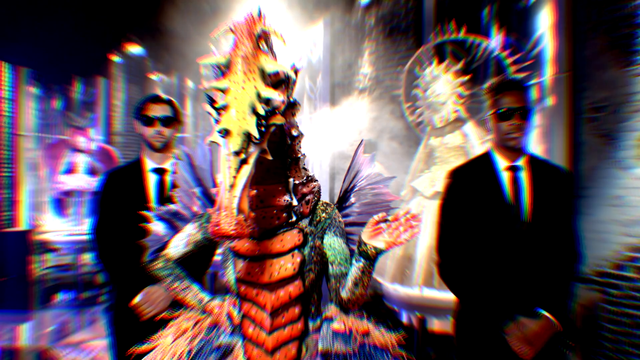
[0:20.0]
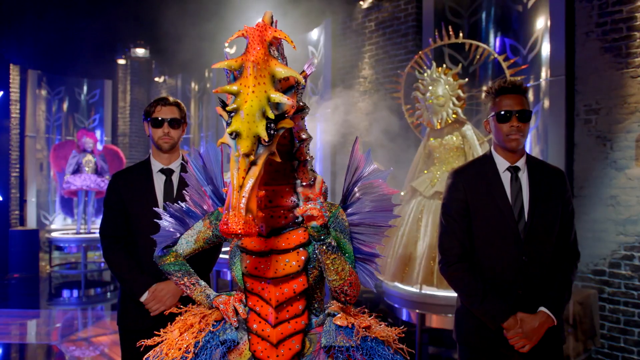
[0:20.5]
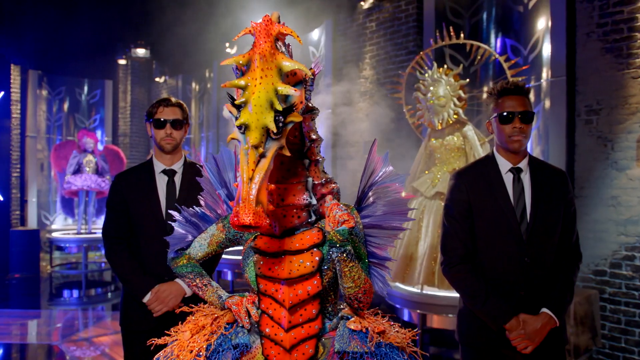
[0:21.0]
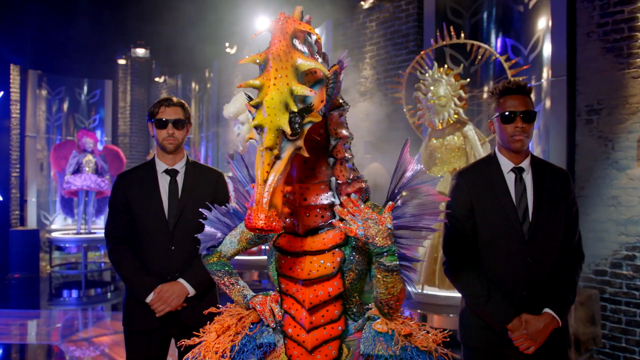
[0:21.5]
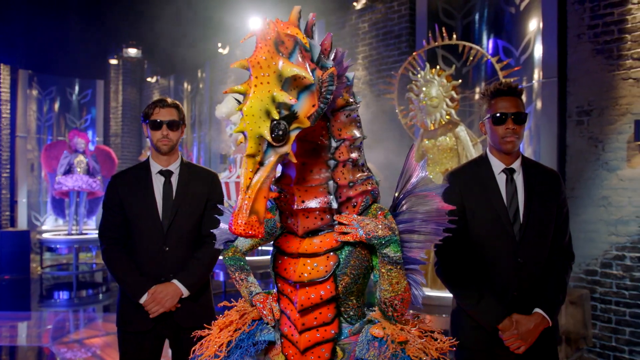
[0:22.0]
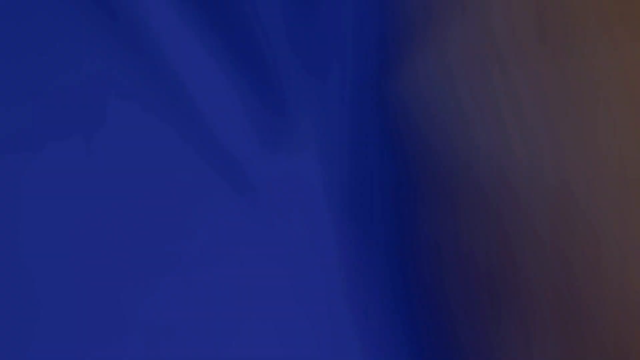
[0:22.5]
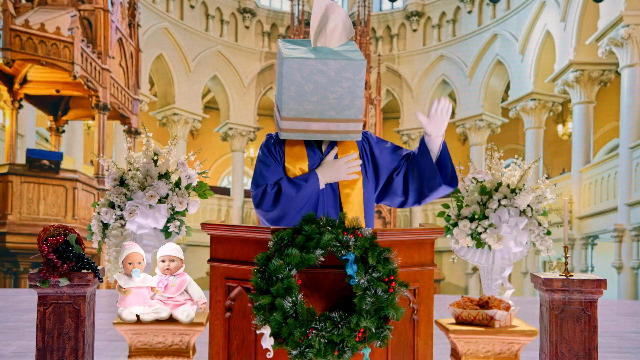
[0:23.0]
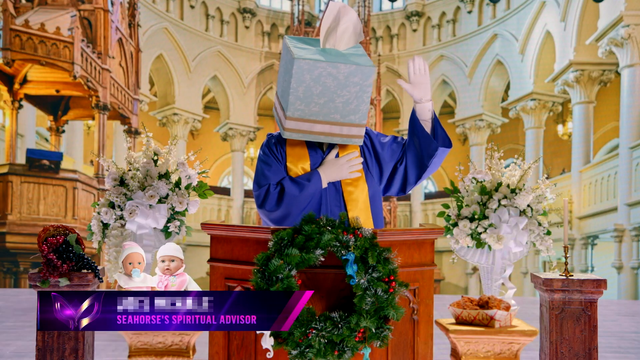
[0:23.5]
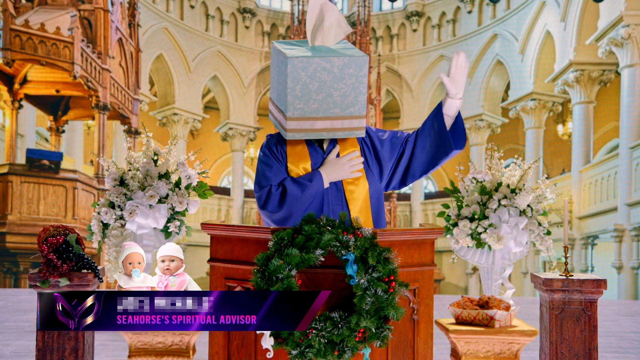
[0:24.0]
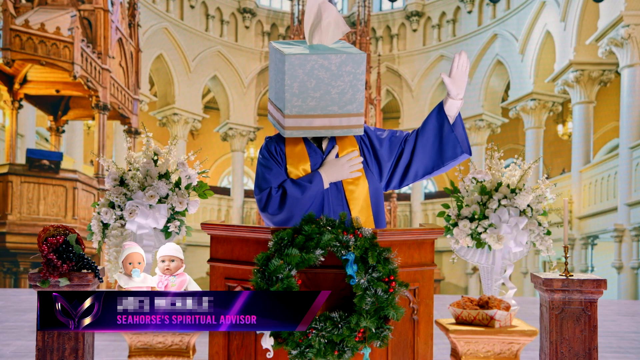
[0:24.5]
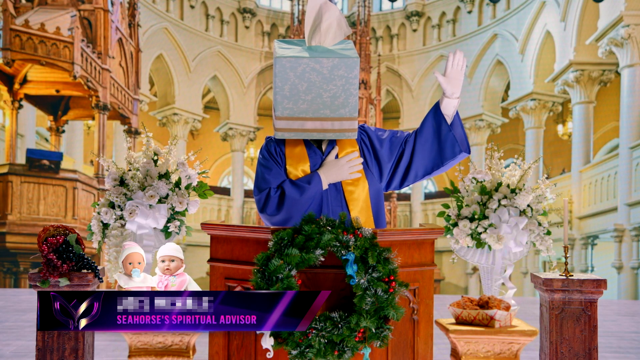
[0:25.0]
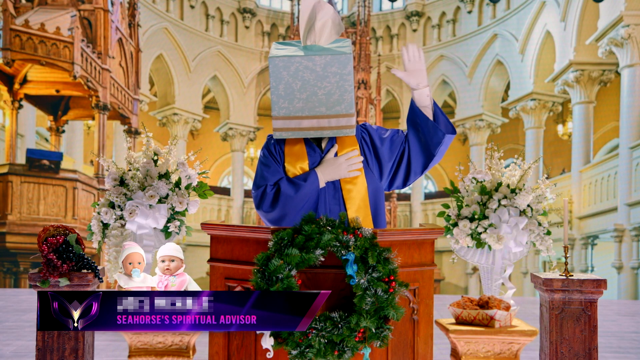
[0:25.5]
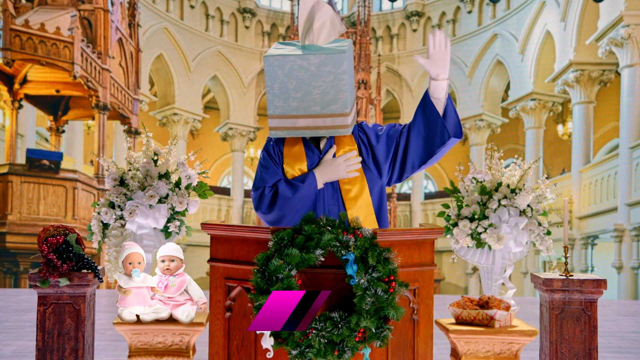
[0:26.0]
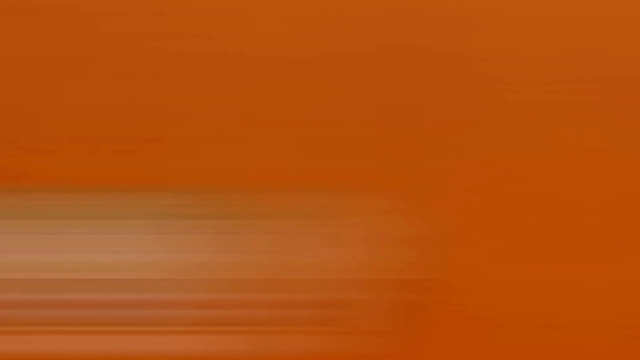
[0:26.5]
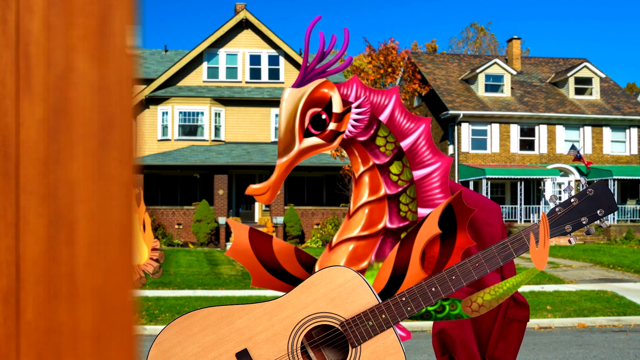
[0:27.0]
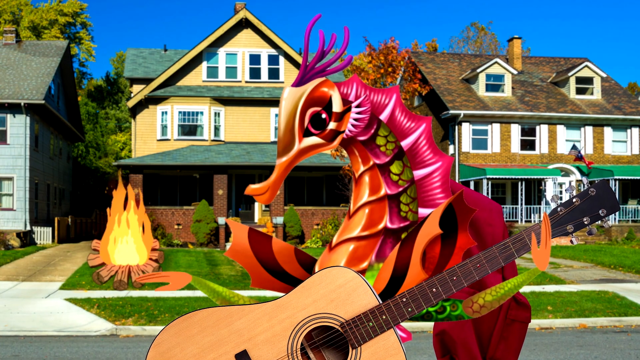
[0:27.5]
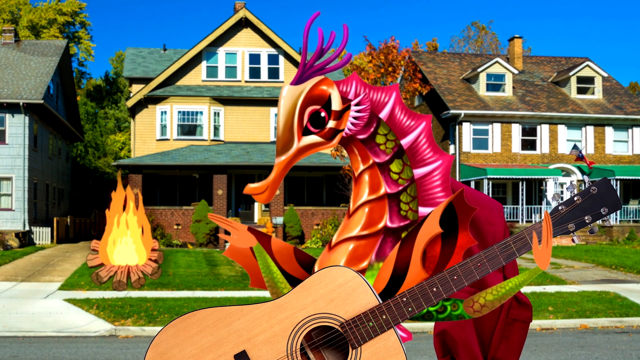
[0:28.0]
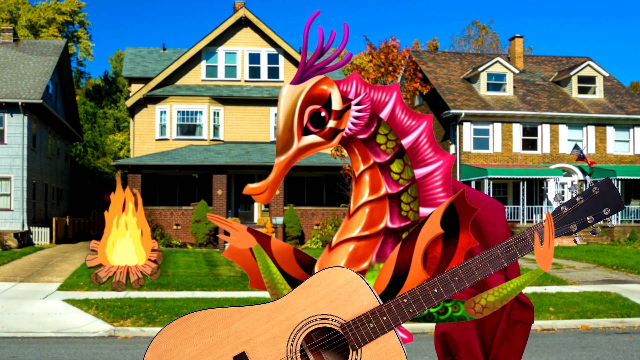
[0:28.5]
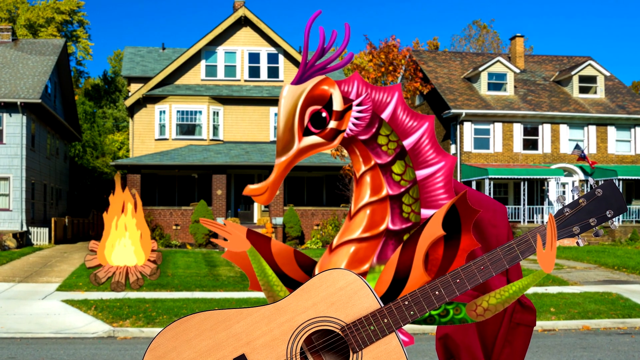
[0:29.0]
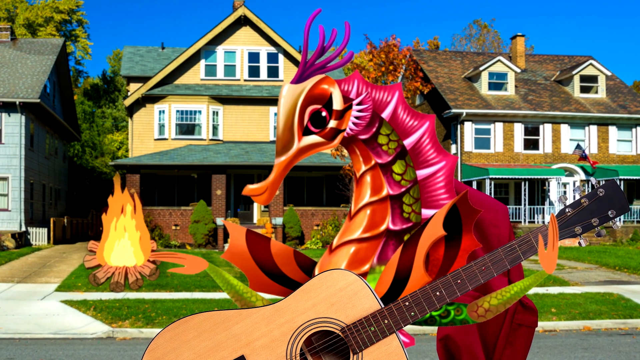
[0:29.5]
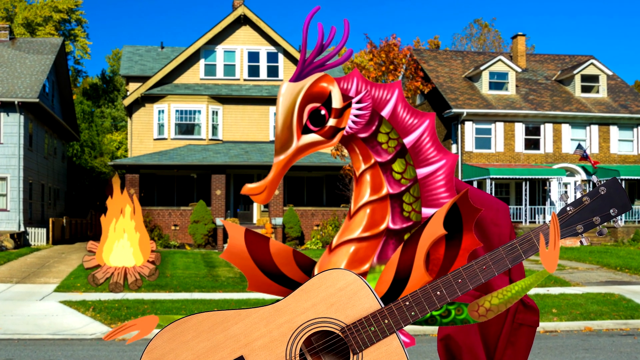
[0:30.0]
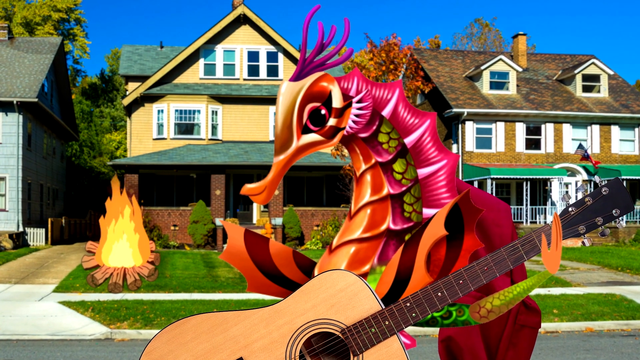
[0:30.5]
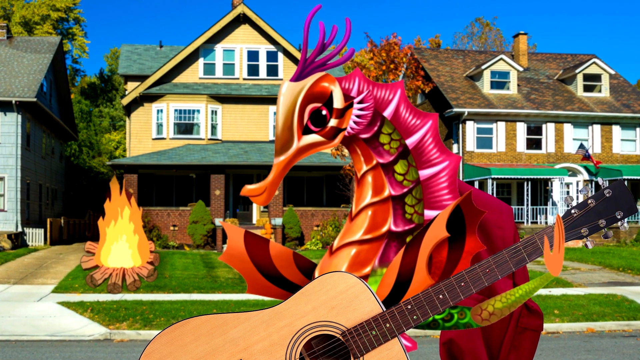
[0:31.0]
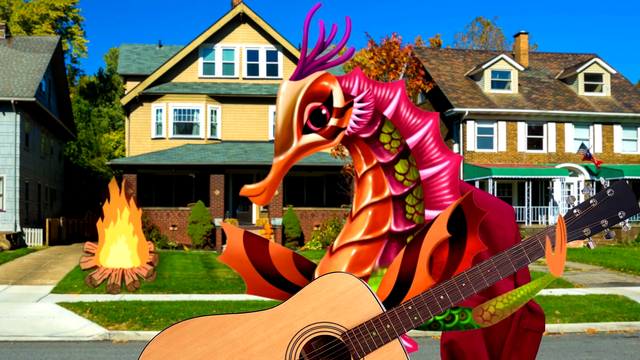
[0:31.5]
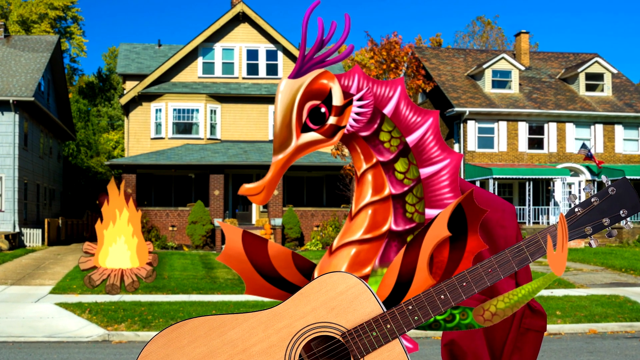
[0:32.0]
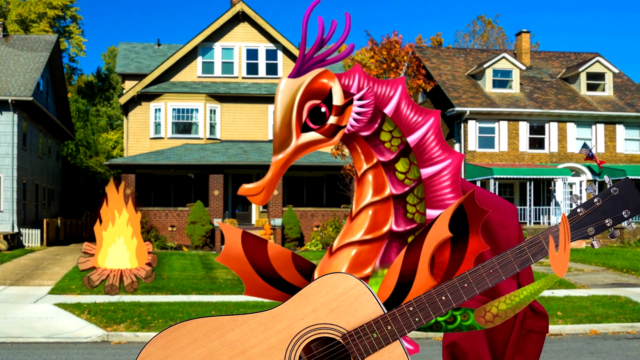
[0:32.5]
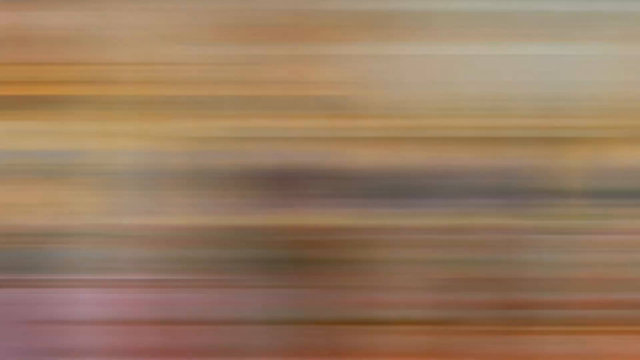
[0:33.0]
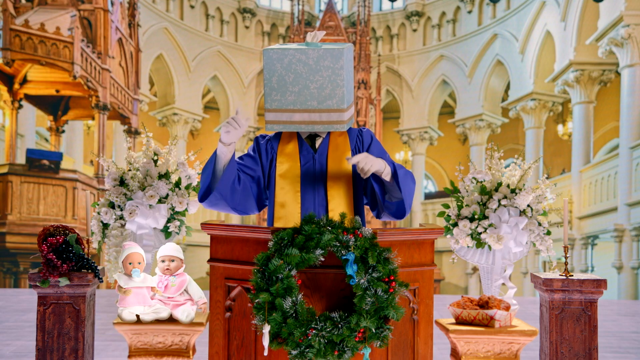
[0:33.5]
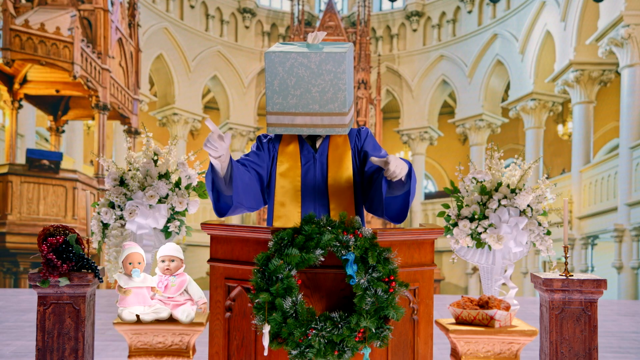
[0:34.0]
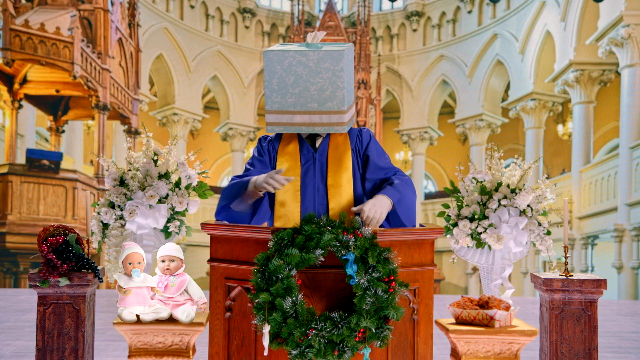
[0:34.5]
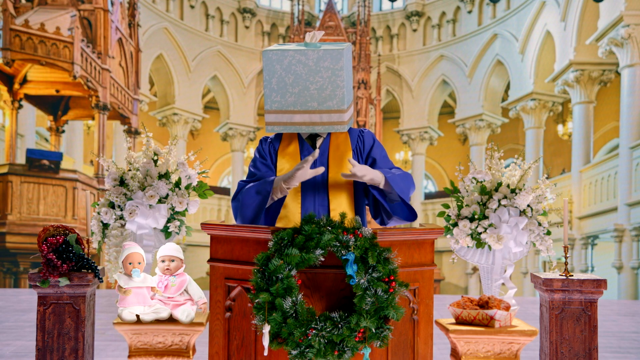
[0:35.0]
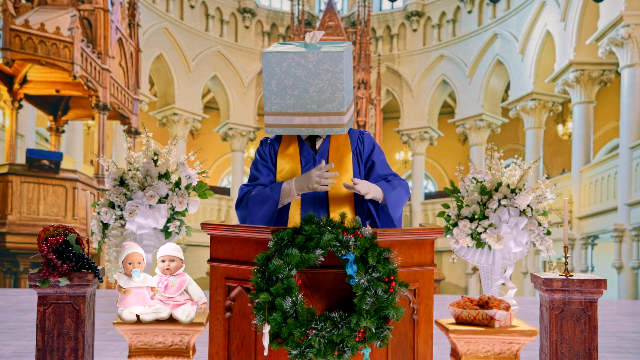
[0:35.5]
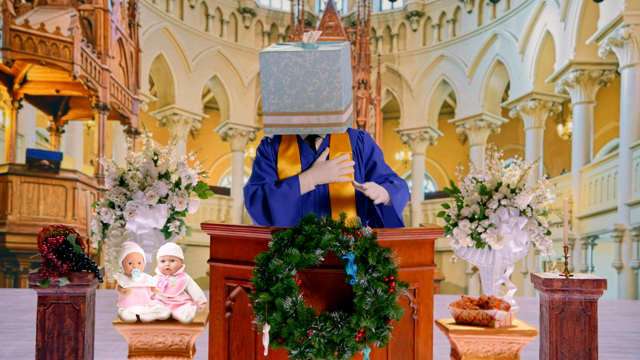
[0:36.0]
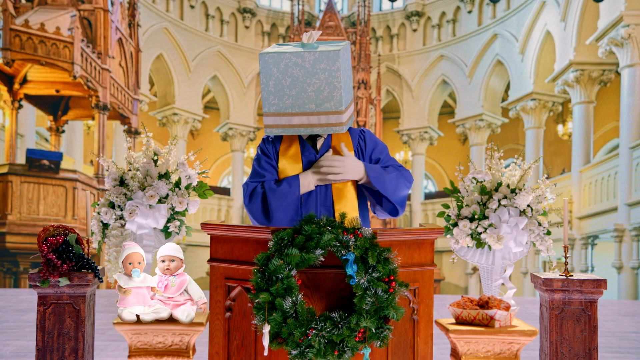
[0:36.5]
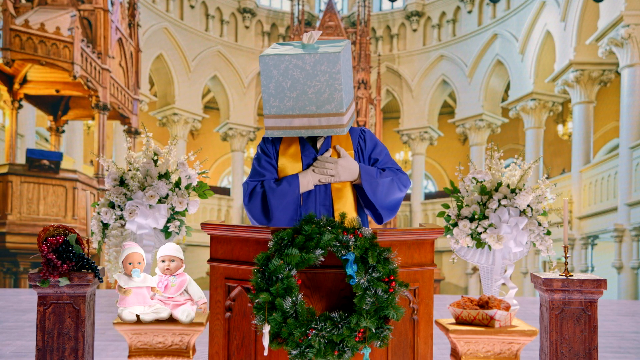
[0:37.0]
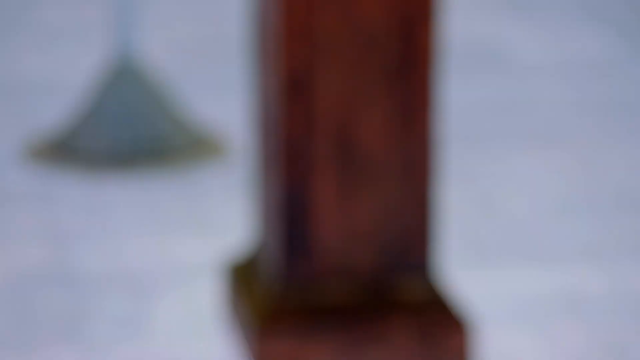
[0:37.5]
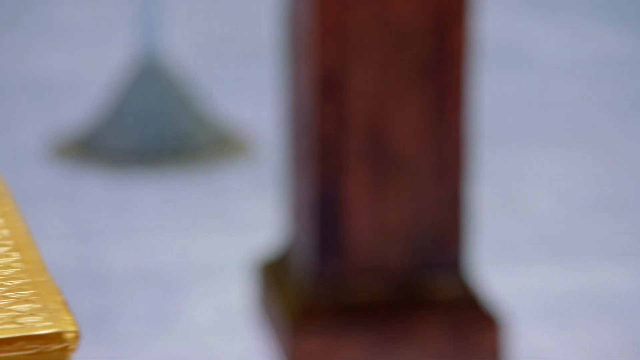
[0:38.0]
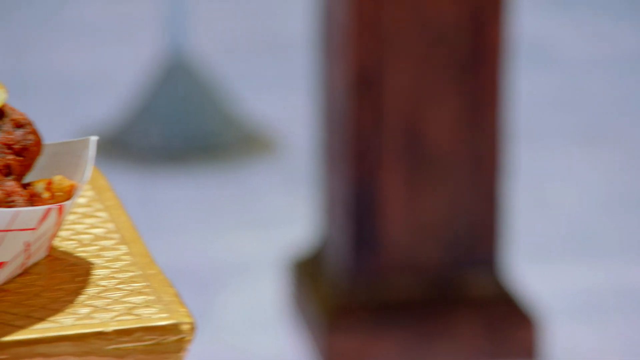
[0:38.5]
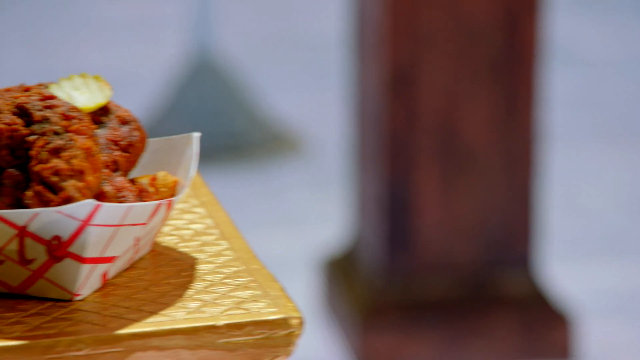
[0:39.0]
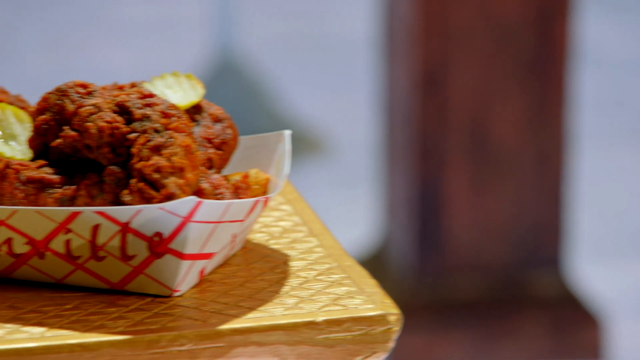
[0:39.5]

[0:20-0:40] Two men wear black suits and dark shades; it looks like one is a white man with a black beard and the other a black man with no beard. Behind them there appear to be different costumes, including a portrayal of a city and what looks like a goddess costume or something similar. In front is what looks like a girl in a seahorse costume, who seems to be explaining something, and another person who looks like a priest, with a helmet on his head that looks like a cube. The video jumps to a seahorse that looks like some sort of cartoon, in pink, purple, orange, green, brown and many colours, with about three houses behind it and some sort of fire burning. The seahorse, some sort of puppet, is holding a guitar. The priest, wearing blue and yellow, has a present on his head. Then a chicken takeaway is shown.